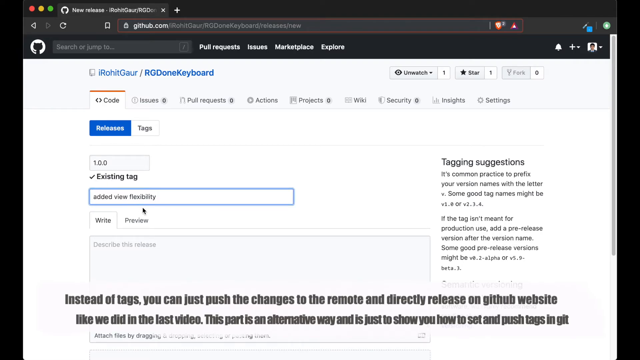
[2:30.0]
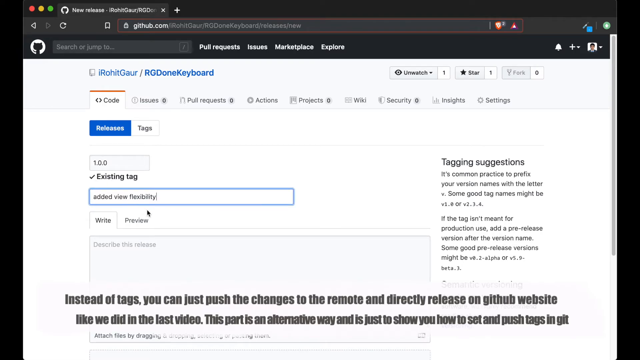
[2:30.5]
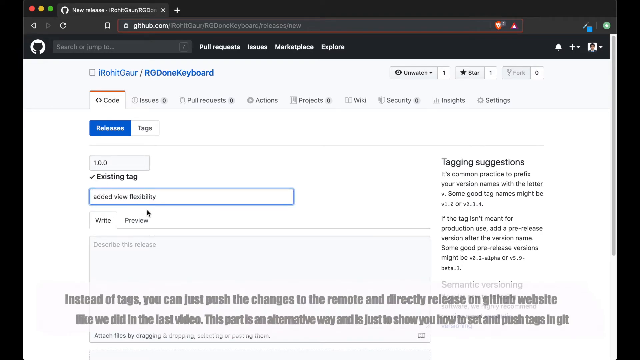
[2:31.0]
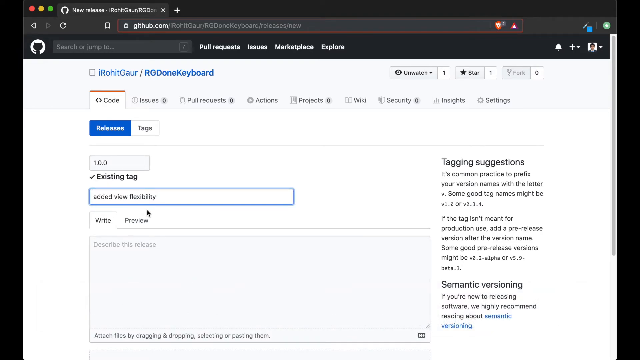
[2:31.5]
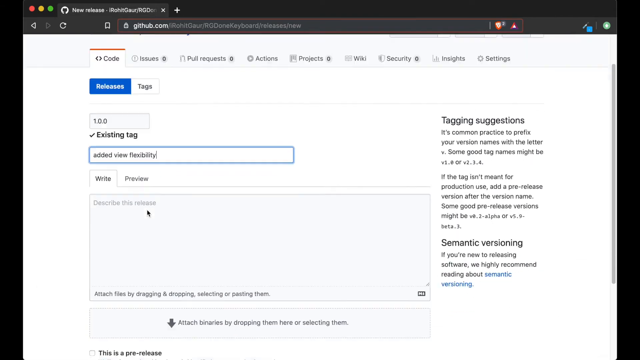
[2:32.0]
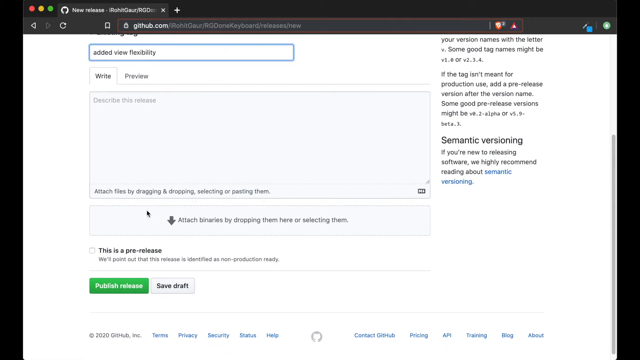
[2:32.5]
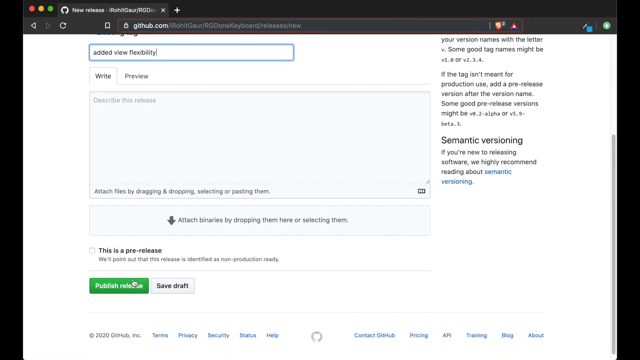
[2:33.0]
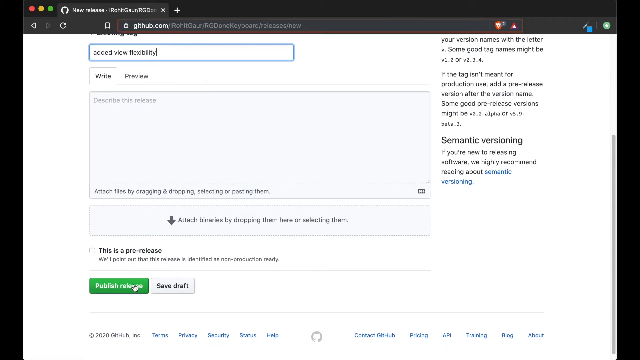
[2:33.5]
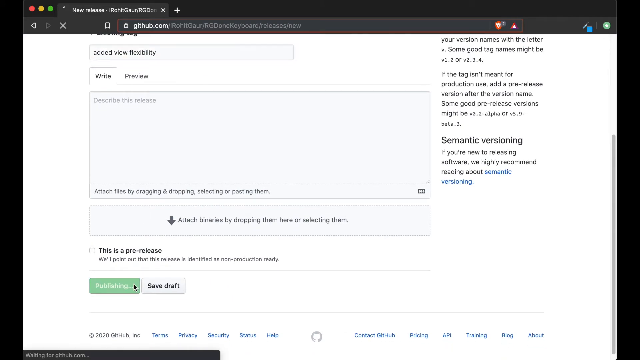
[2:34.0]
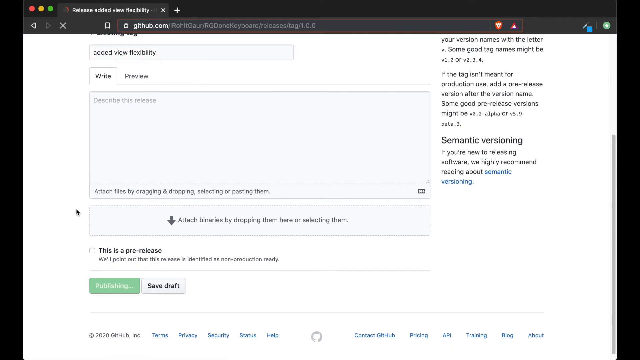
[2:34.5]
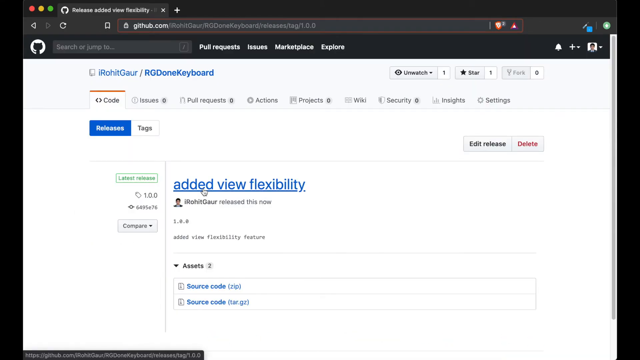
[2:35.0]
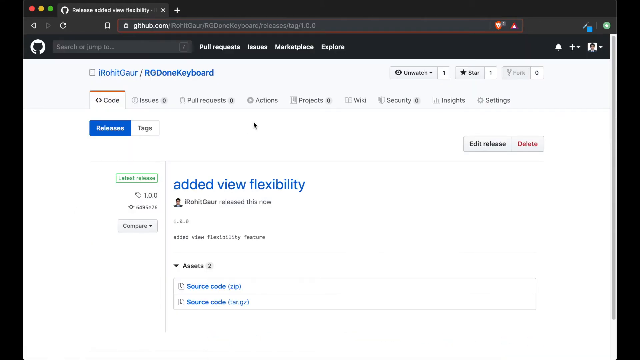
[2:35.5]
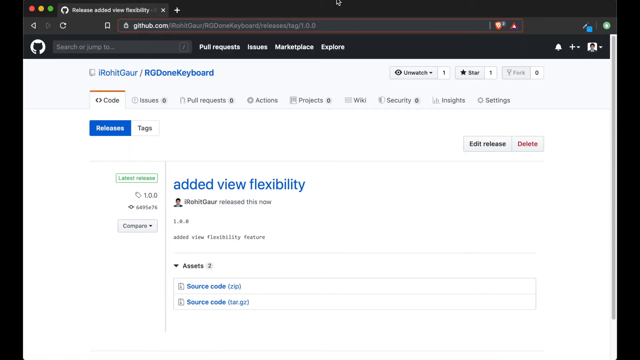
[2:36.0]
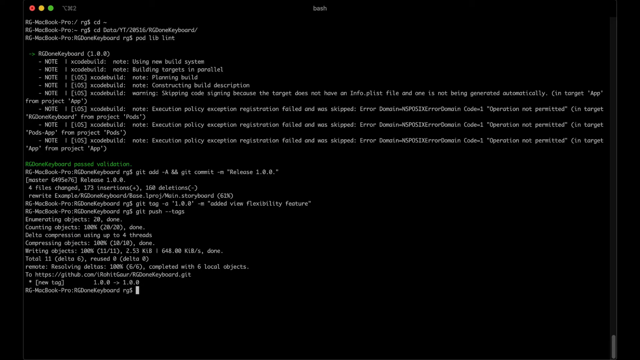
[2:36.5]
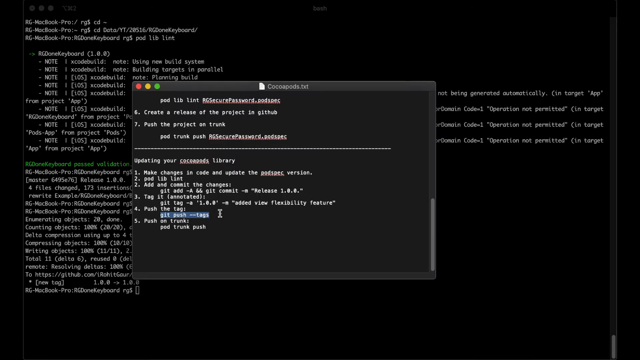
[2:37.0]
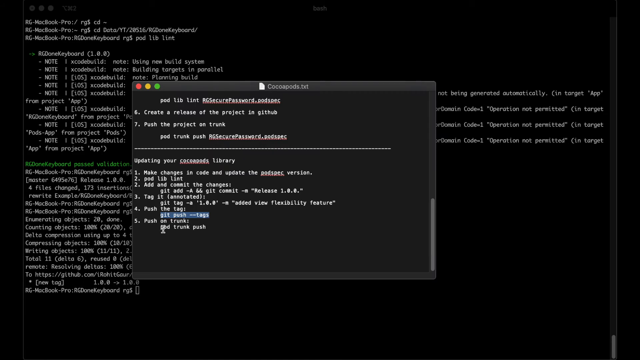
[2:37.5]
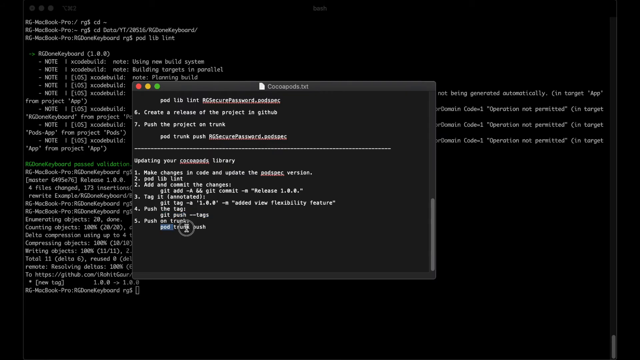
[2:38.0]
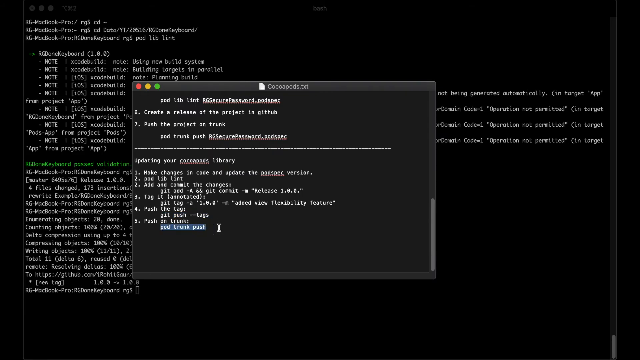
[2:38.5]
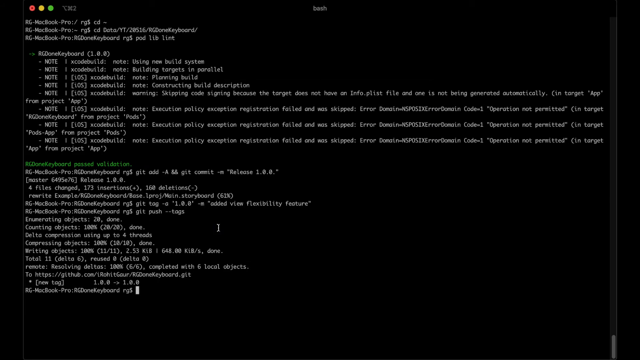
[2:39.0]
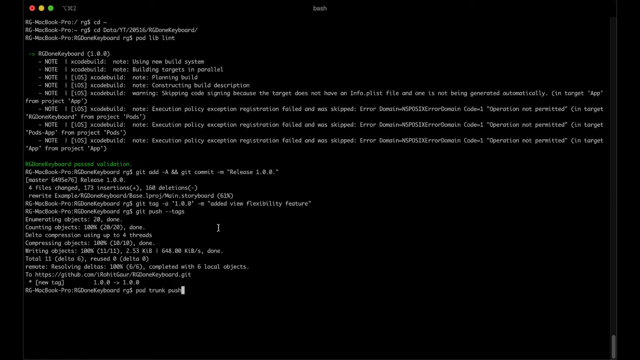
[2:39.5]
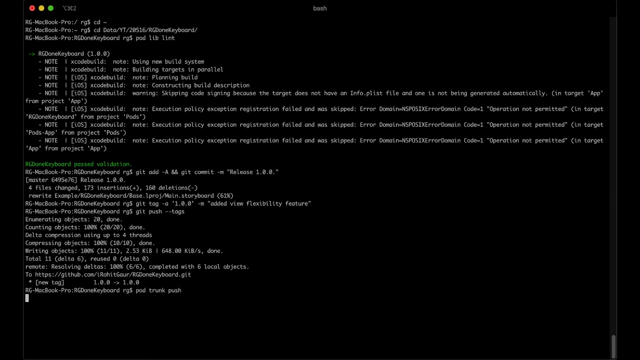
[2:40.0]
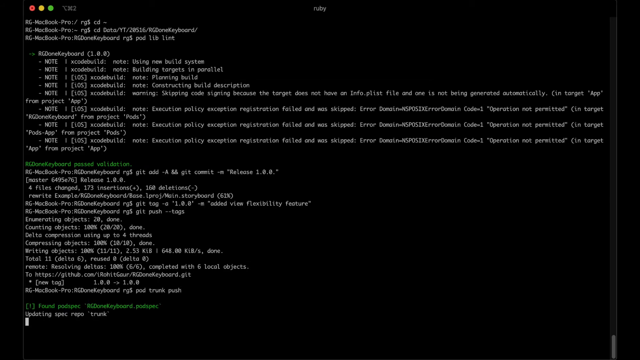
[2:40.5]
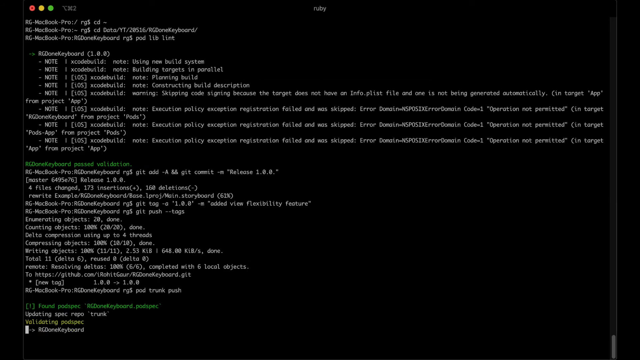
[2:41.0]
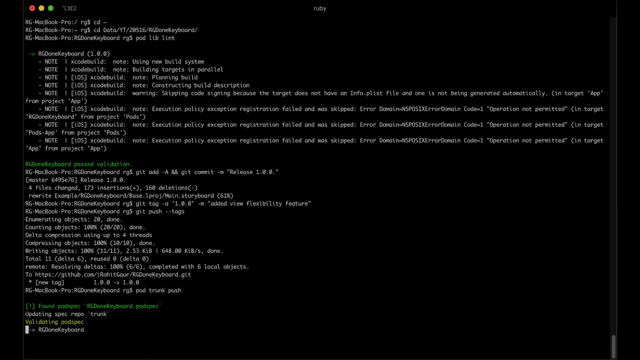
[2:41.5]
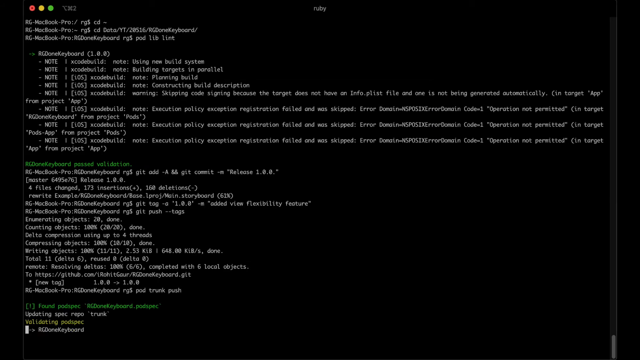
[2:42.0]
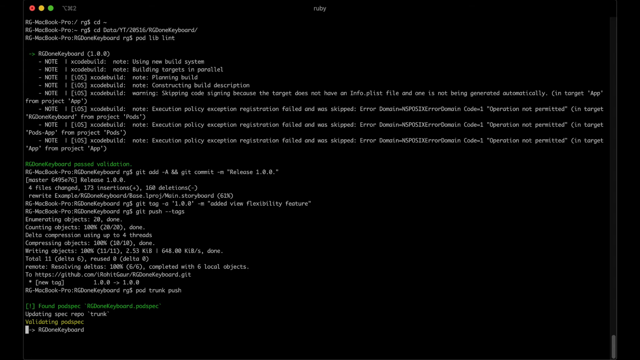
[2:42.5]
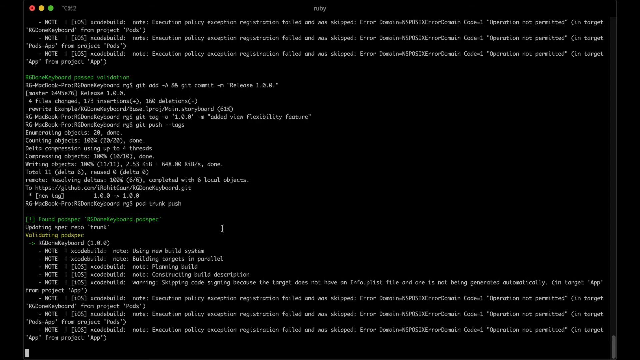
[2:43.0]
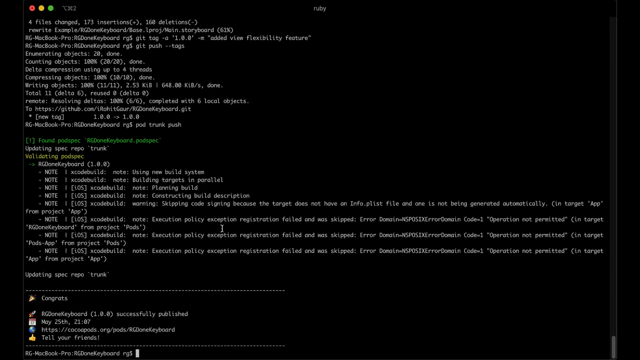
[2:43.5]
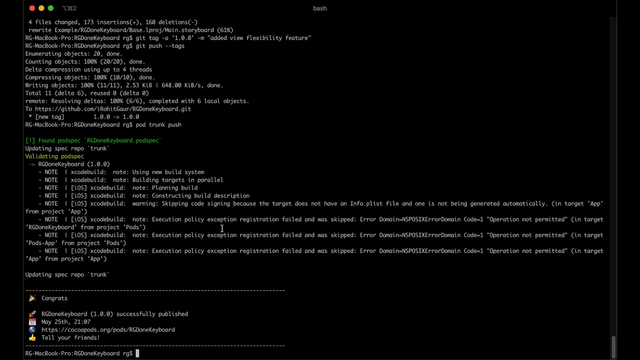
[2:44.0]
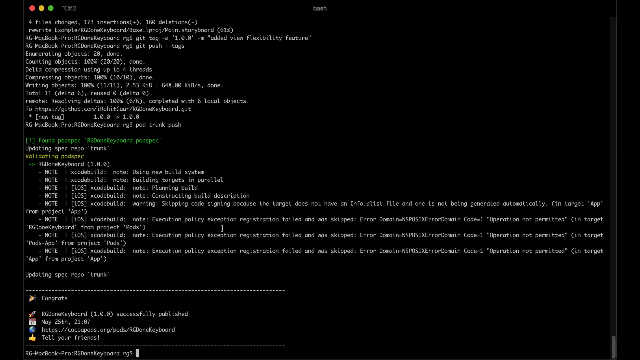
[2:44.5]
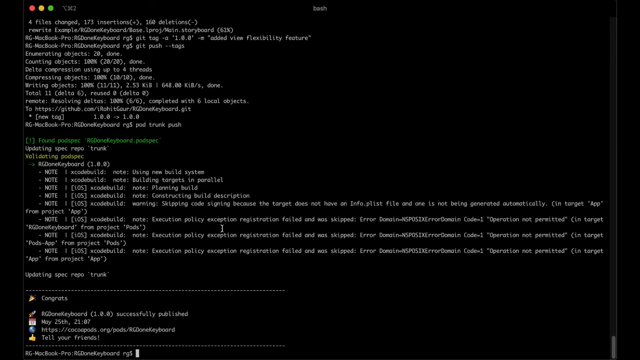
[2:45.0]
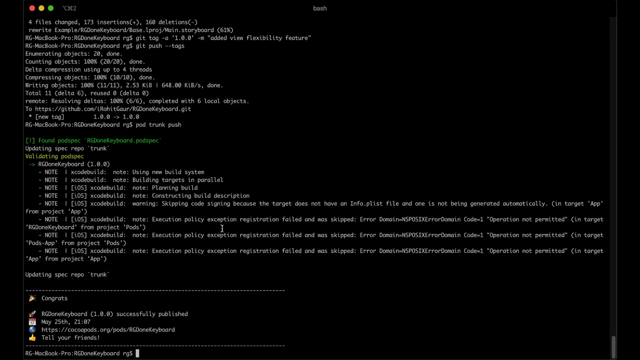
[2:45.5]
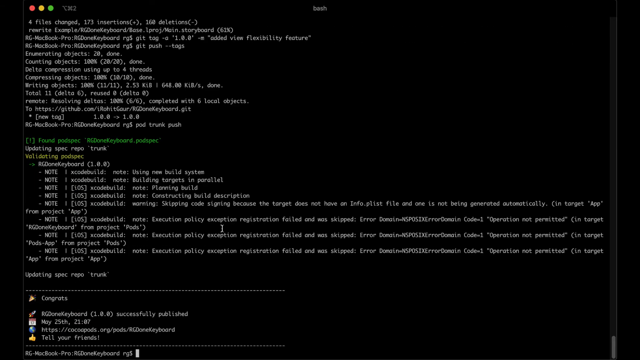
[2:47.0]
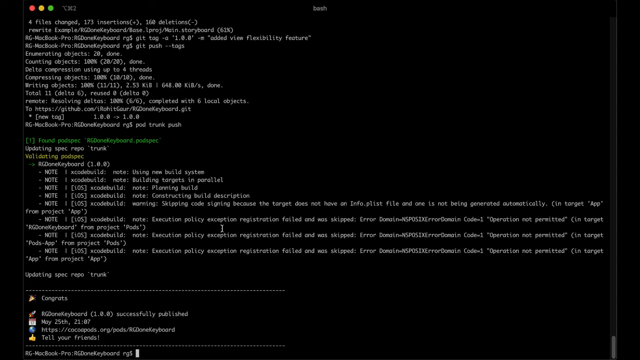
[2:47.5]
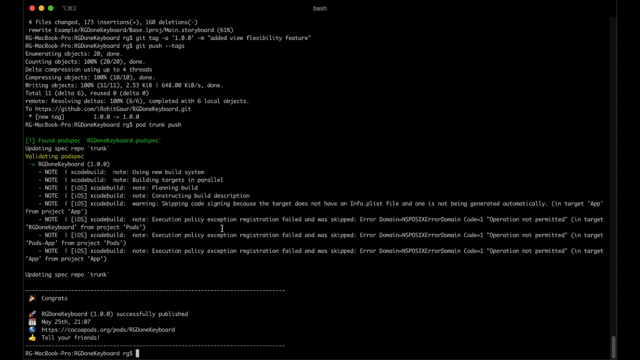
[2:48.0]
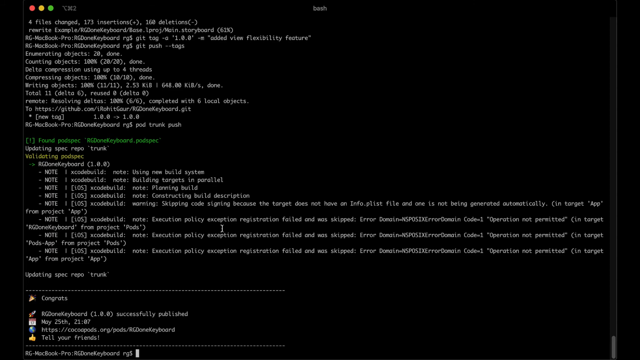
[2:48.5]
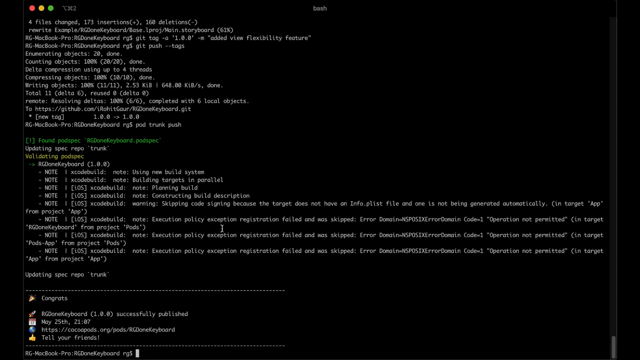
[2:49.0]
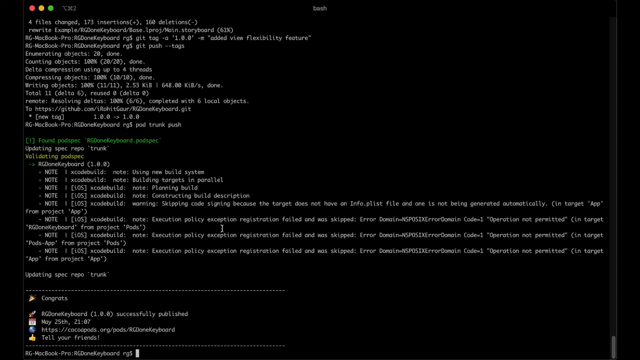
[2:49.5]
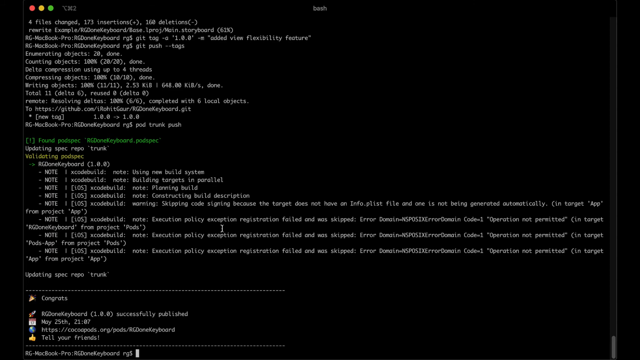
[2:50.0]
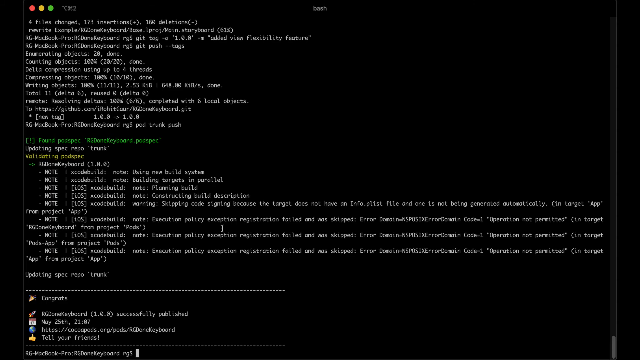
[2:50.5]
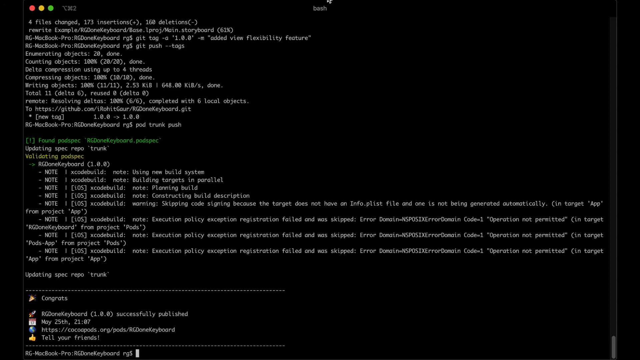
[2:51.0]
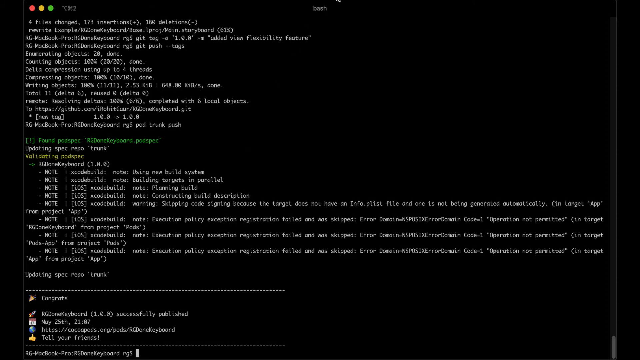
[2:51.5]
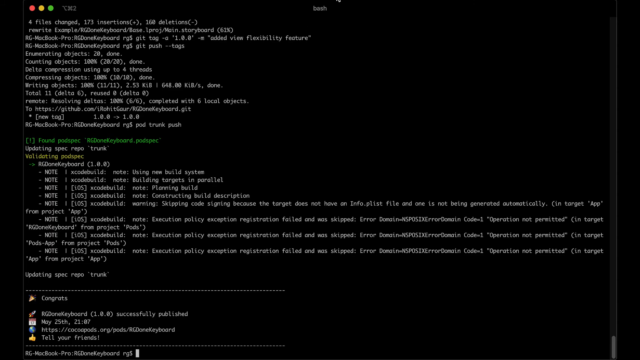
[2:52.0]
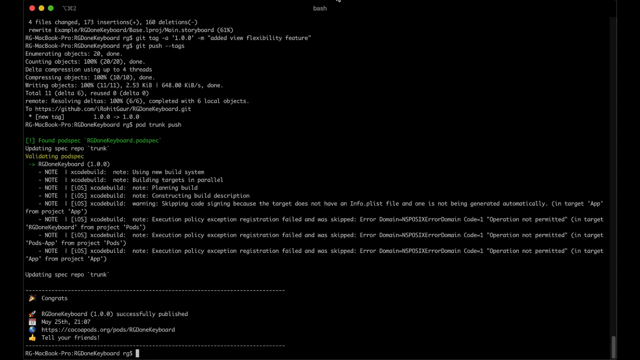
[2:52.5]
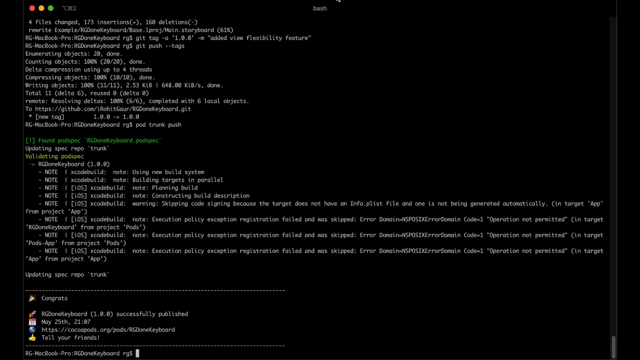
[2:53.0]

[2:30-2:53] The cursor moves on an existing tags page. It scrolls down to click "publish release", a green button, which briefly reads "publishing" before the page moves to another view. The cursor clicks on "added new flexibility". The command prompt page returns with a text box in the middle of it. The cursor highlights some text, and then more lines of text appear on the command prompt page. The cursor scrolls down and hovers over this text. The text on the screen is mostly white with some green and some yellow. One line, "execution policy exception registration failed", is repeated three times in a row on the page, seemingly indicating some error in the code. The video ends on this command prompt page.